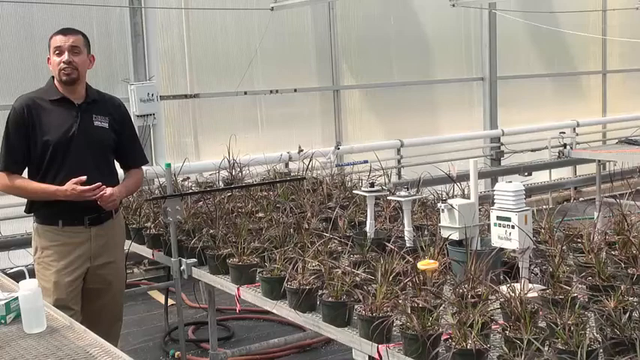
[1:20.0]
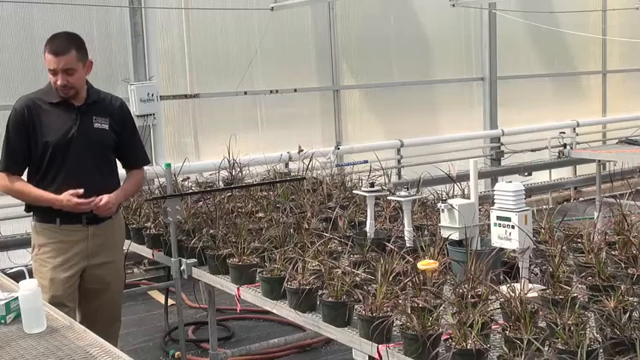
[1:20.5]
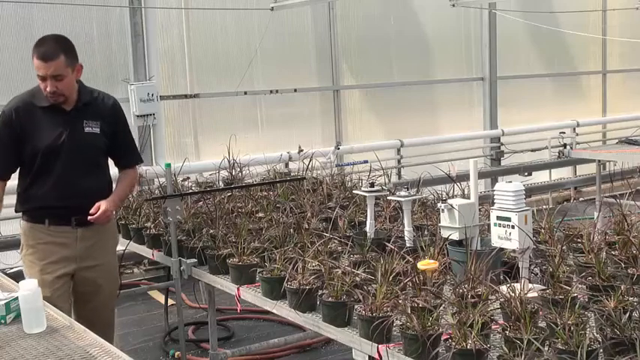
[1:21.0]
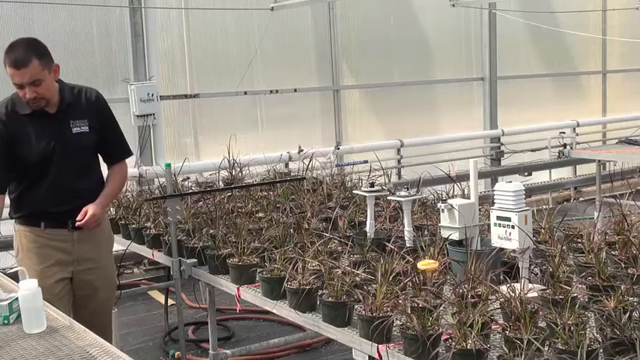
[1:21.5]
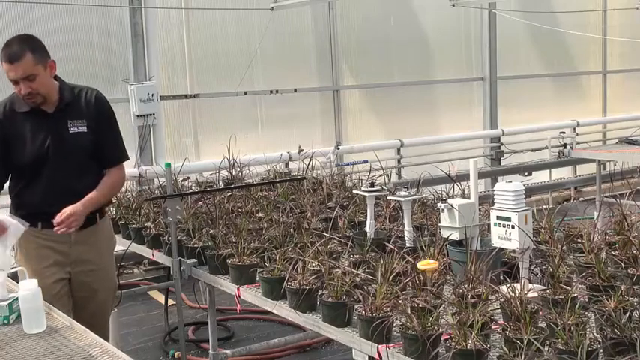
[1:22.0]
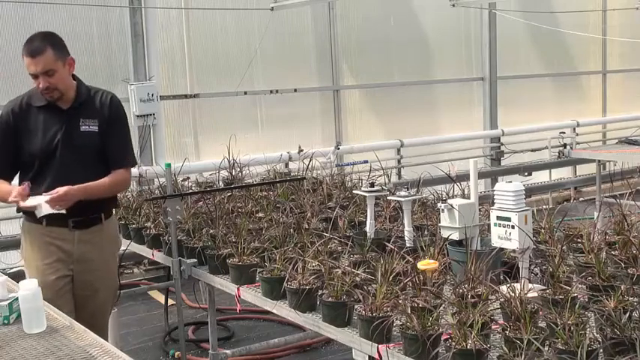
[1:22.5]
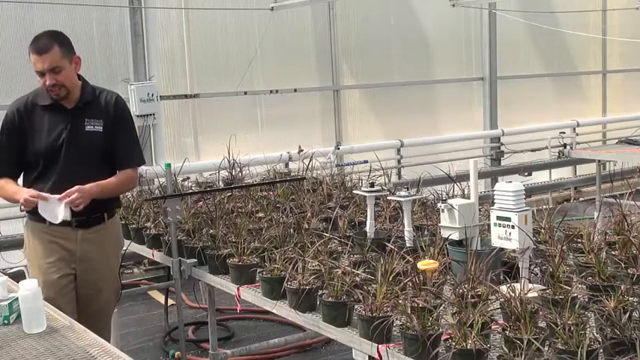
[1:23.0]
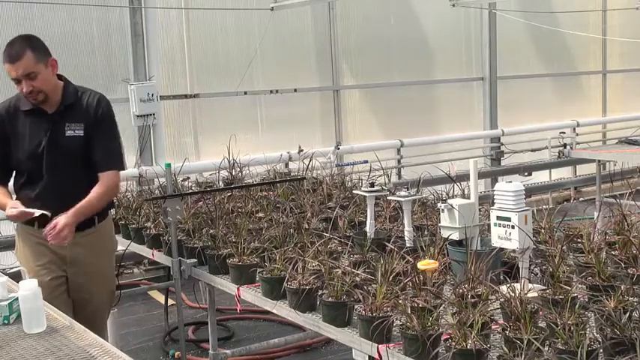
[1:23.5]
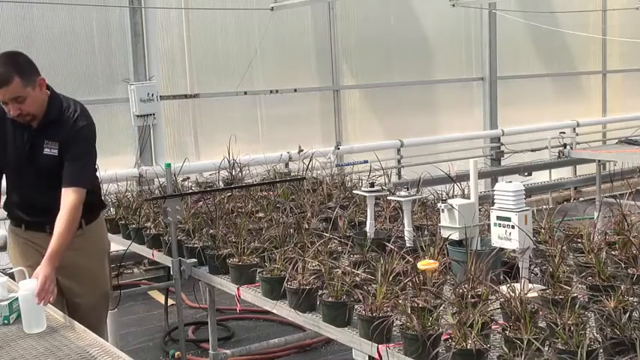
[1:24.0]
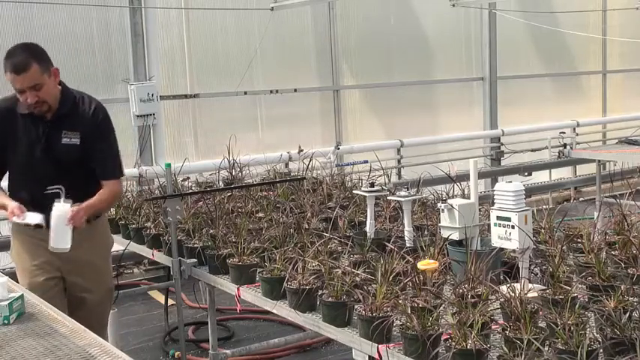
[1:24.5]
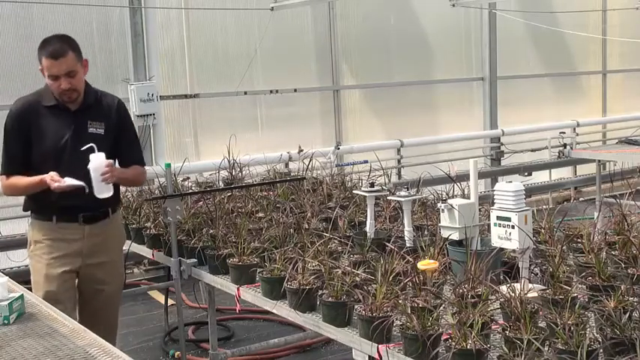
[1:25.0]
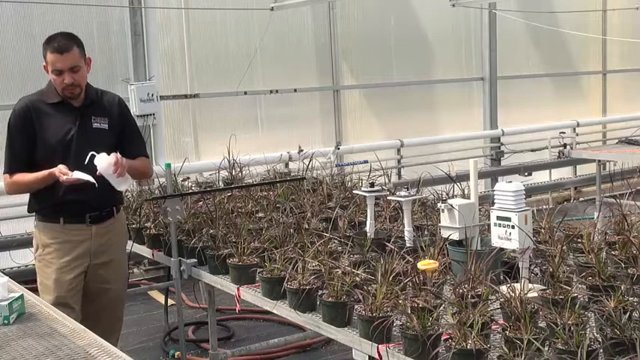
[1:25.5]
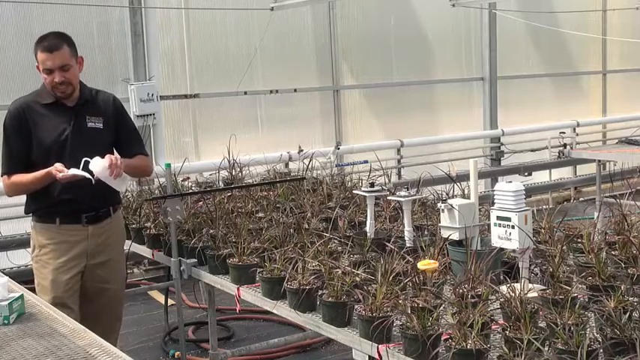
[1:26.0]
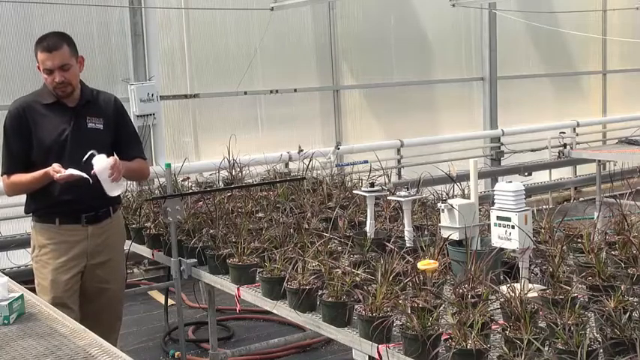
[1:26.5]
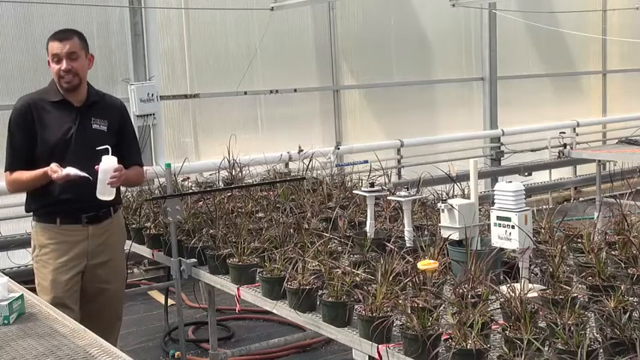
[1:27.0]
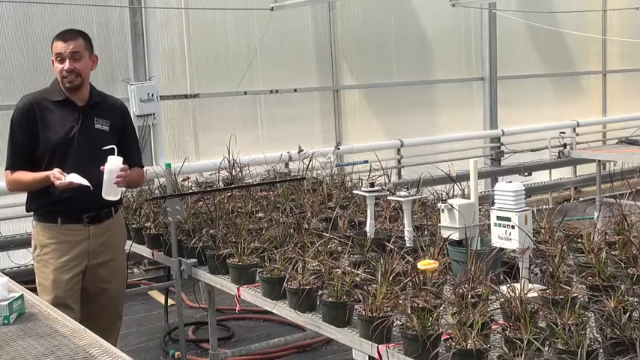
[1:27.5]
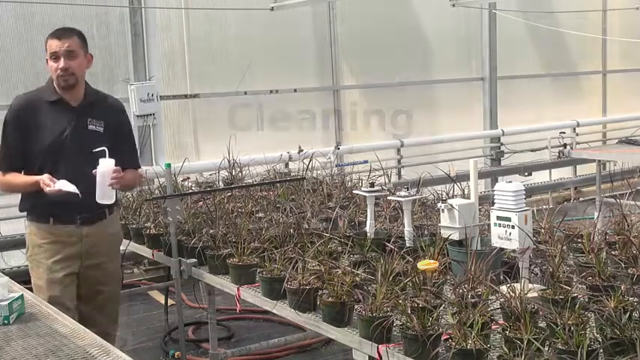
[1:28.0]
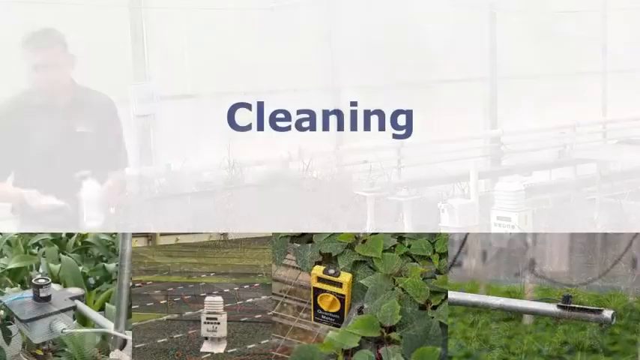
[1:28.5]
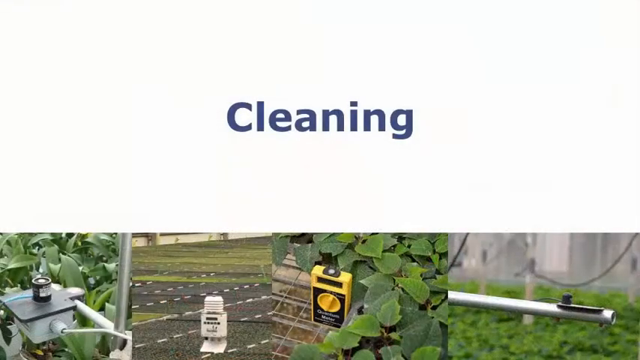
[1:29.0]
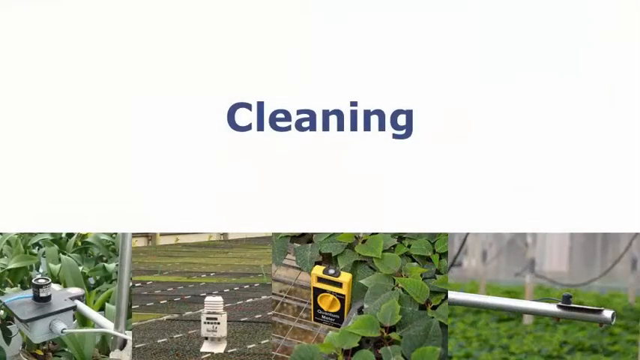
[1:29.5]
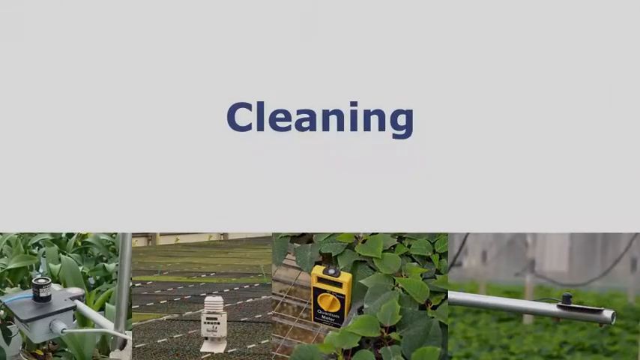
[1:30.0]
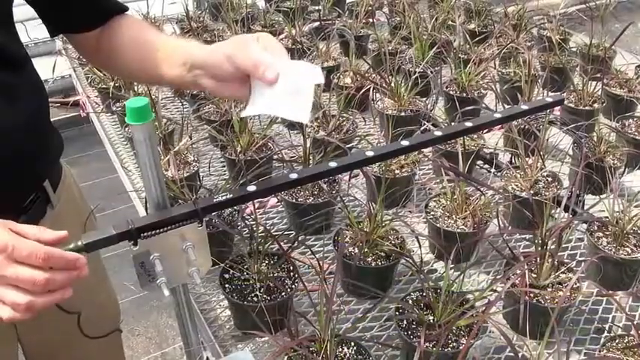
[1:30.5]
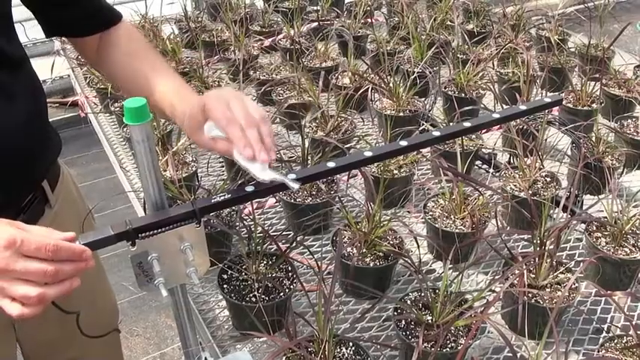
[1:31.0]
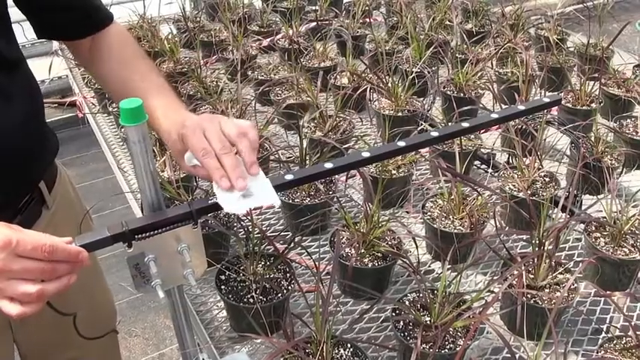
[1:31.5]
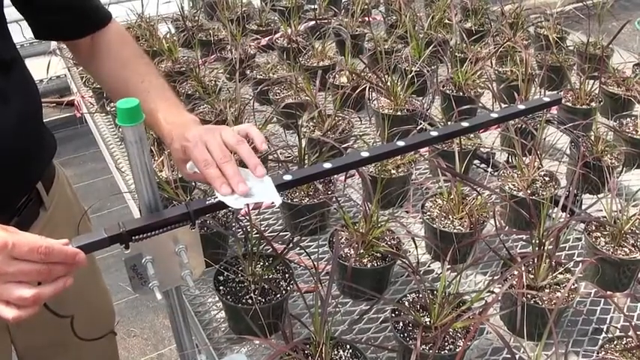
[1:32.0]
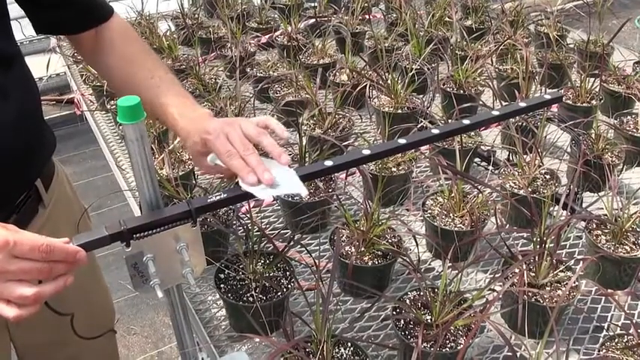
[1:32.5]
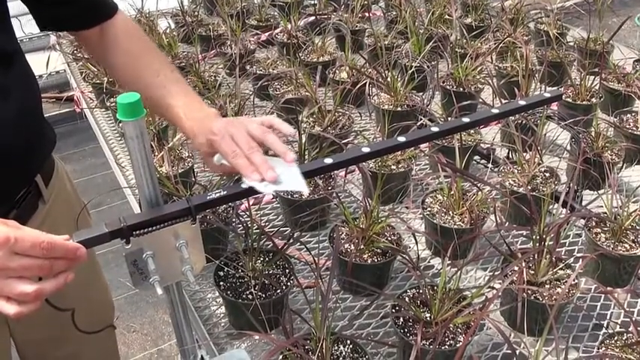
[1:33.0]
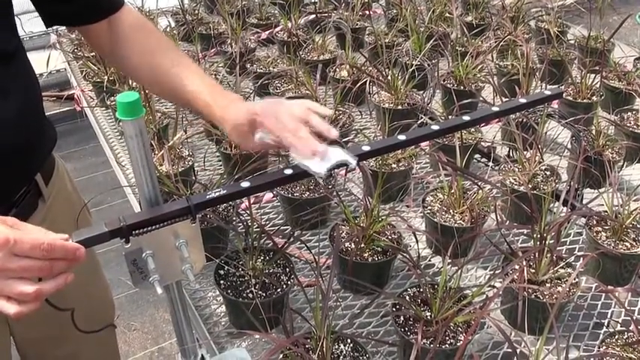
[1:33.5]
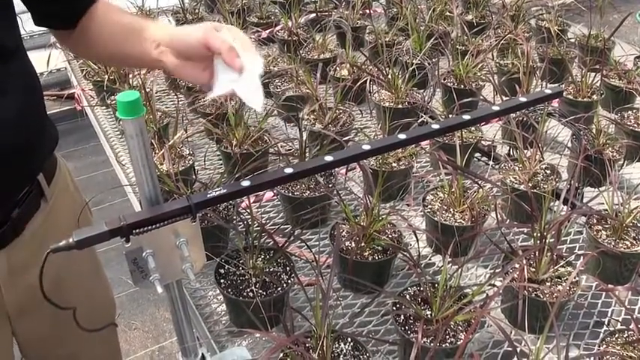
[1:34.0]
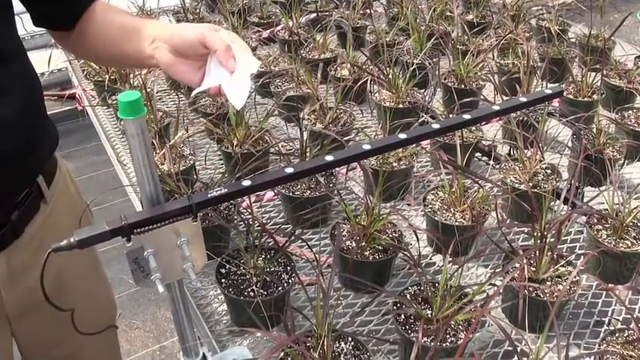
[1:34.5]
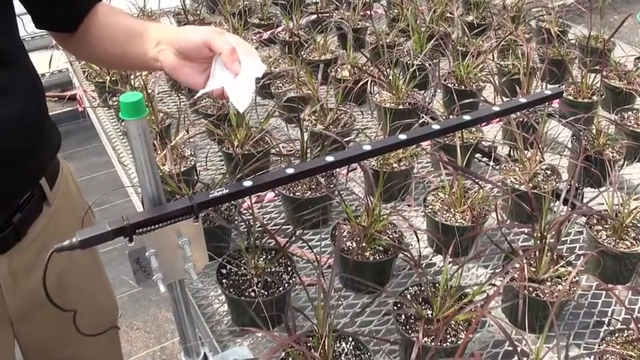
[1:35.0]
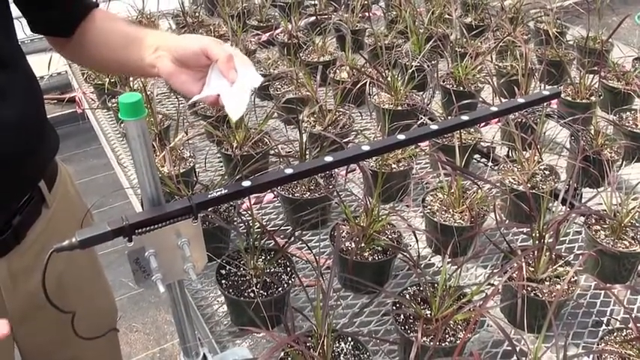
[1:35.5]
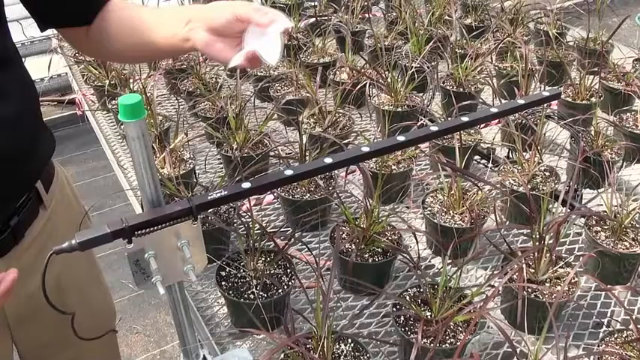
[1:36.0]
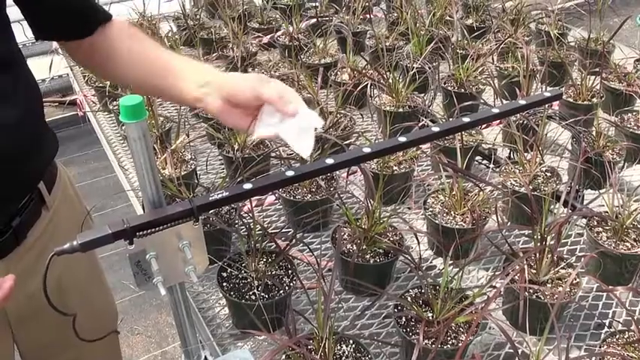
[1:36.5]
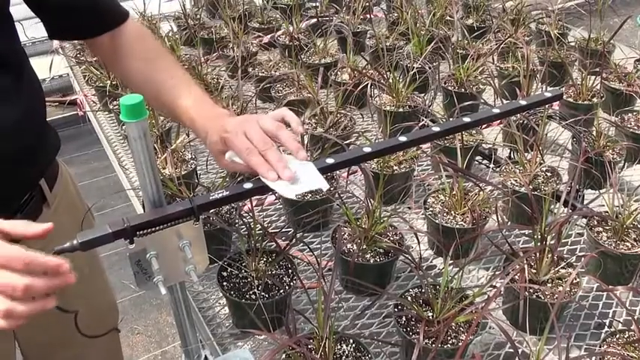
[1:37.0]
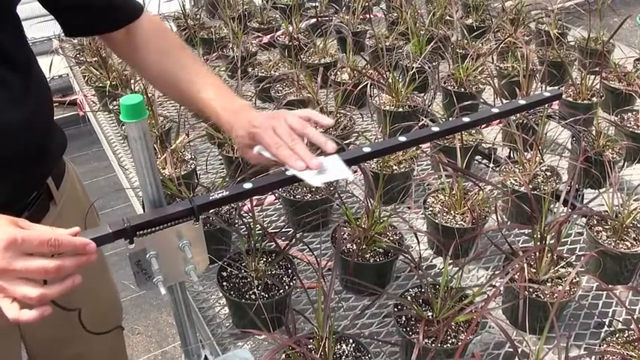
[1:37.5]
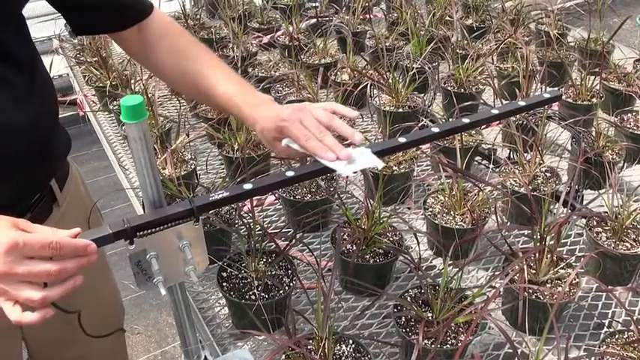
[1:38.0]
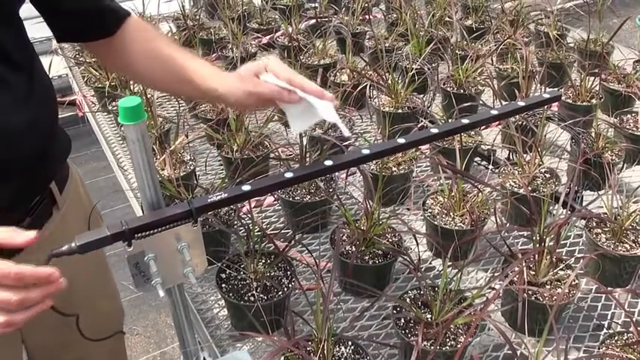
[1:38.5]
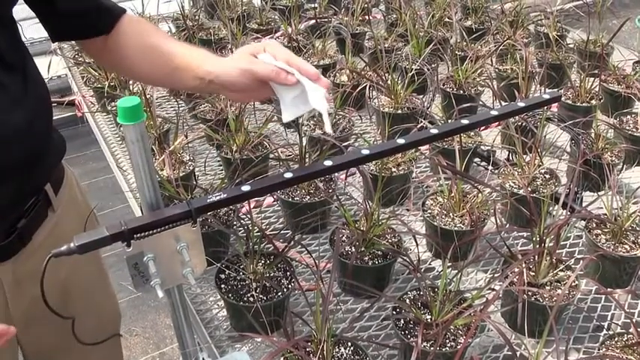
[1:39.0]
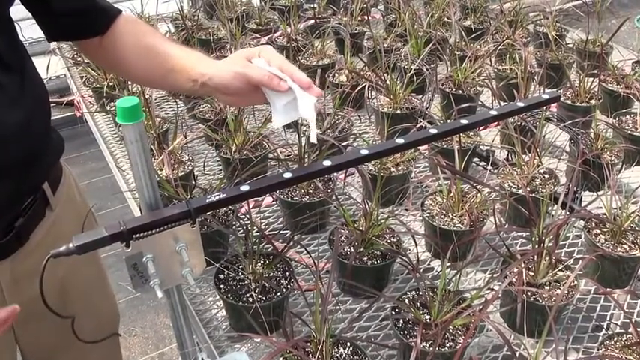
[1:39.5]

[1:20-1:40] The same man wears a short-sleeved black shirt that appears to be a polo with a collar, and he has short dark hair, either black or brown. He wears khaki-colored pants and what looks like a black or brown belt. To the right of him on screen, which is his left, is a bunch of plants in pots with poles and sticks coming out of them. His mouth moves as he talks. He leans over and gets a napkin with his right hand, then gets a clear squeeze bottle with a little tube coming out of it and, with the other hand, squirts some of its contents onto the white cloth he picked up. Blue text reads "clean it," and he moves off the screen. The view returns to him and zooms in on the paper towel he wet with the substance; the paper towel has moved from one hand to the other and is now in his left hand. He uses it to clean the black pole with white circles on it, which are spread apart at equal distances.